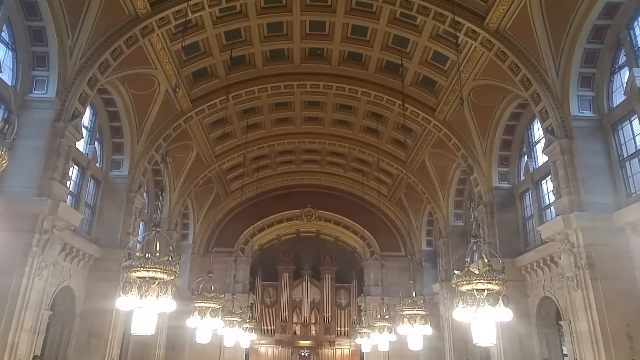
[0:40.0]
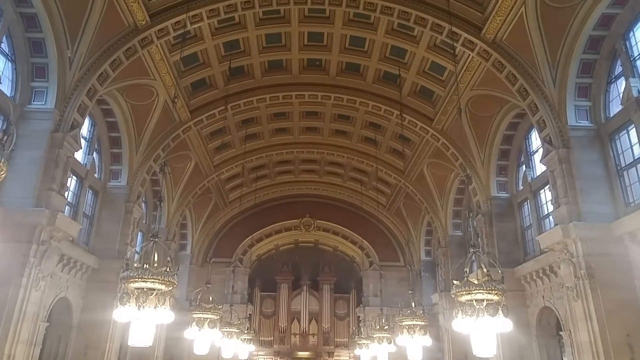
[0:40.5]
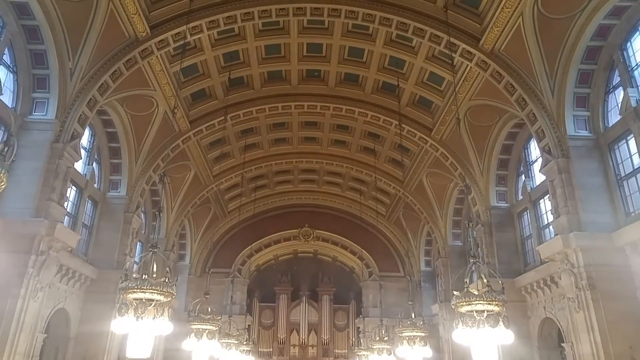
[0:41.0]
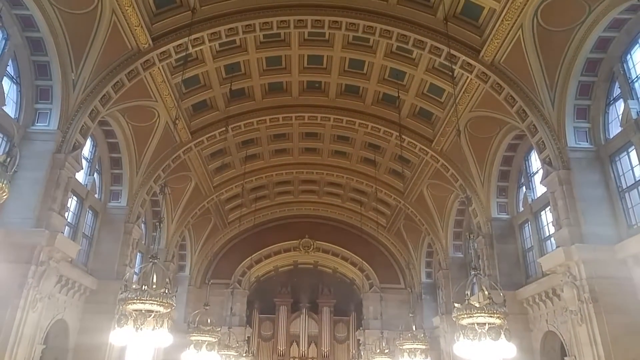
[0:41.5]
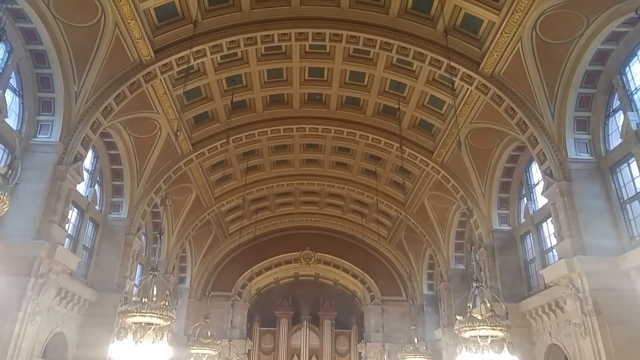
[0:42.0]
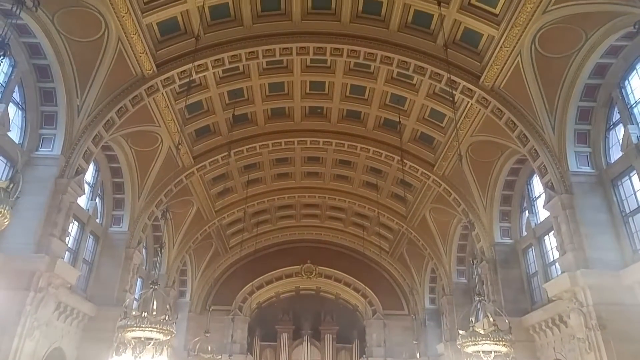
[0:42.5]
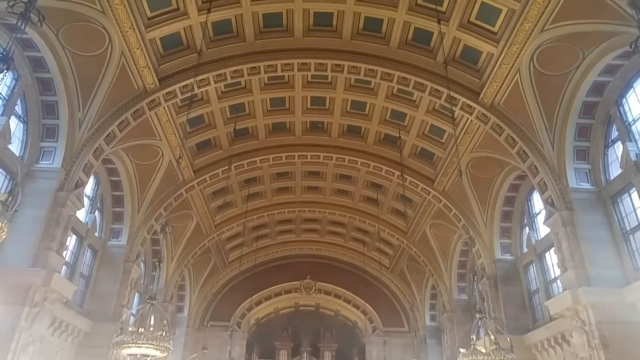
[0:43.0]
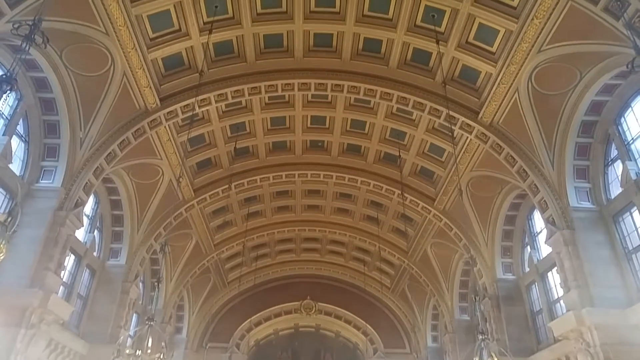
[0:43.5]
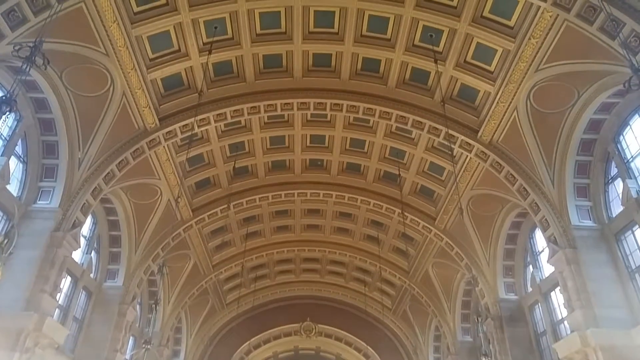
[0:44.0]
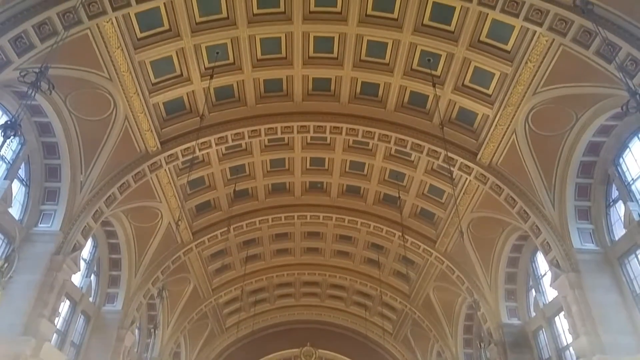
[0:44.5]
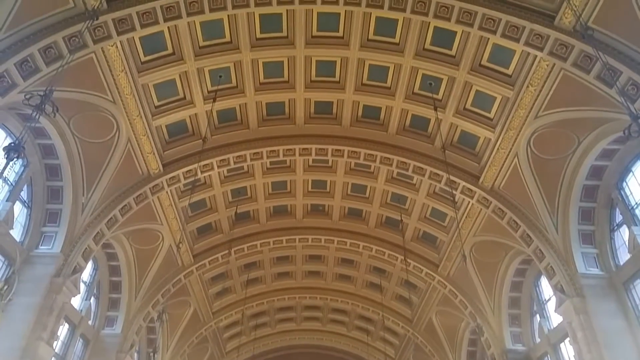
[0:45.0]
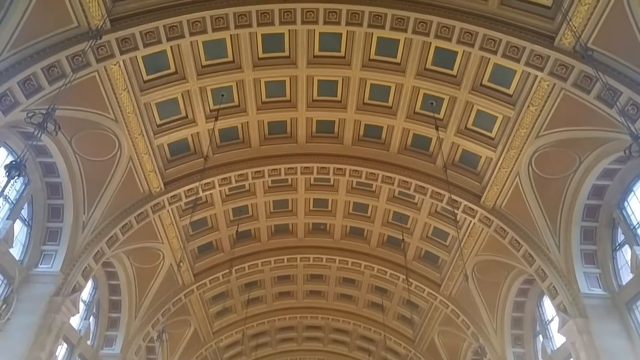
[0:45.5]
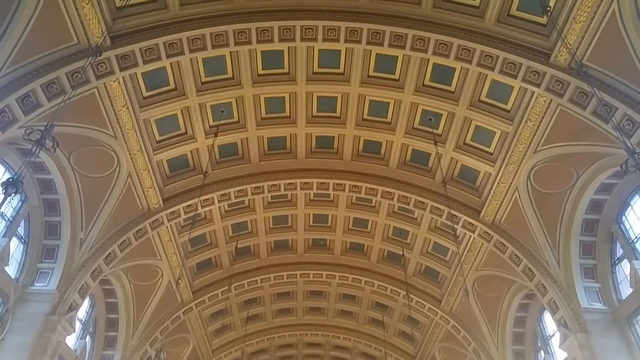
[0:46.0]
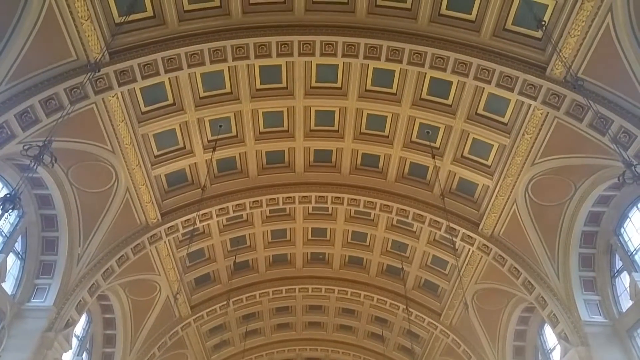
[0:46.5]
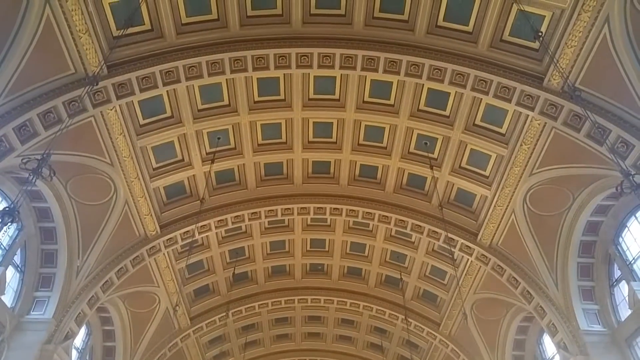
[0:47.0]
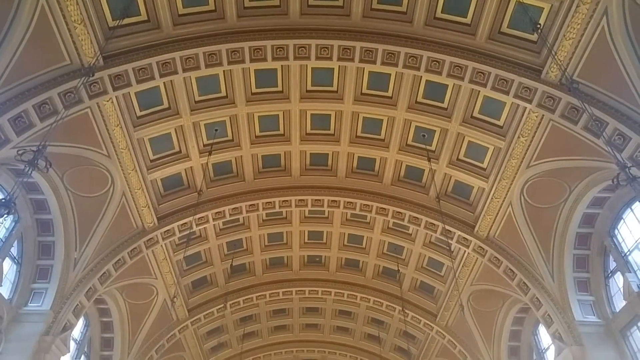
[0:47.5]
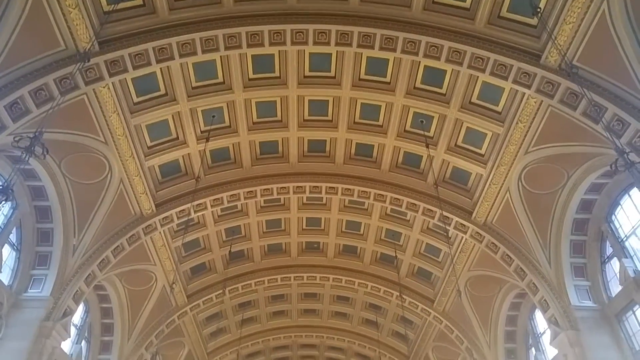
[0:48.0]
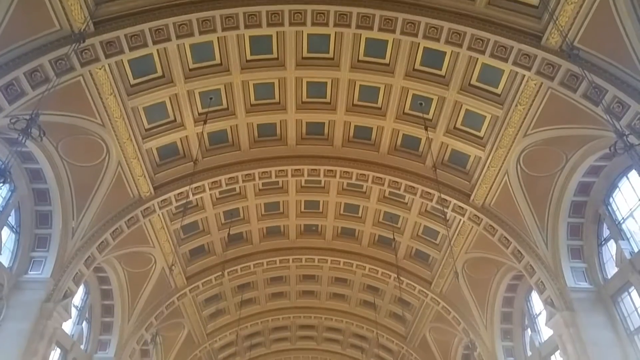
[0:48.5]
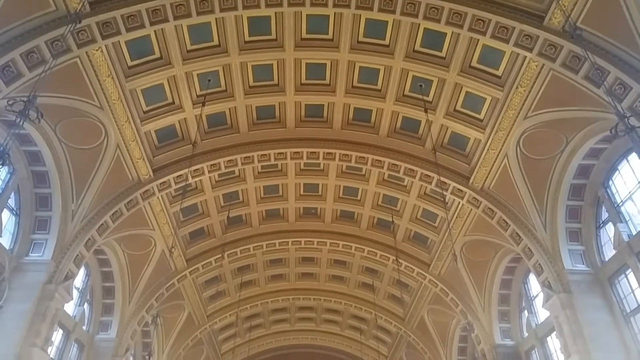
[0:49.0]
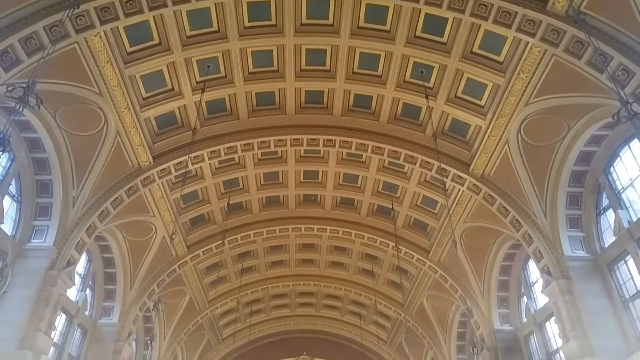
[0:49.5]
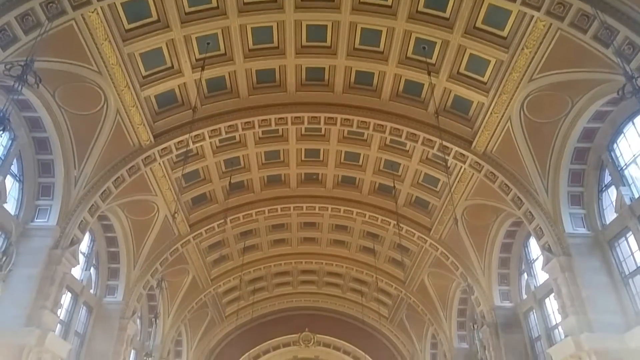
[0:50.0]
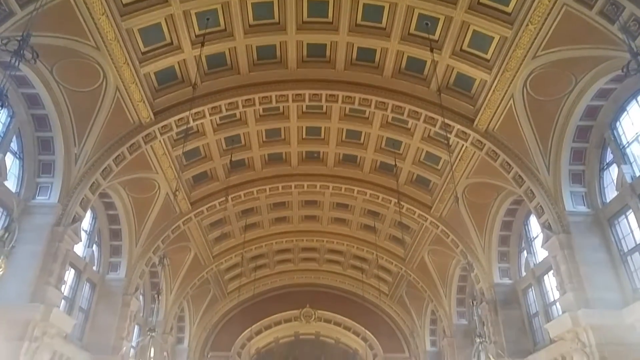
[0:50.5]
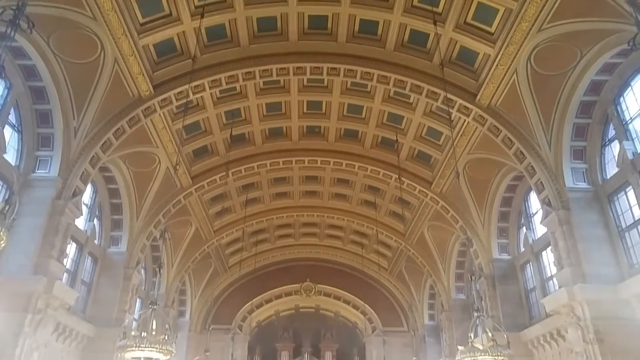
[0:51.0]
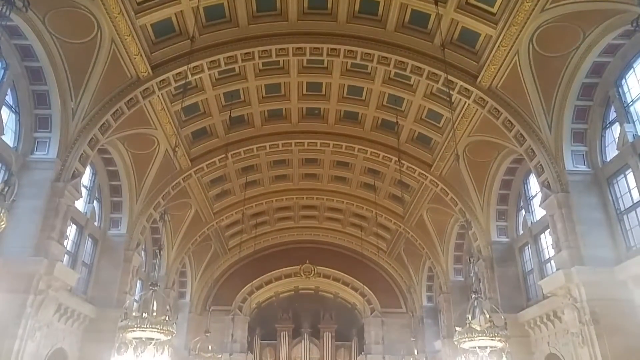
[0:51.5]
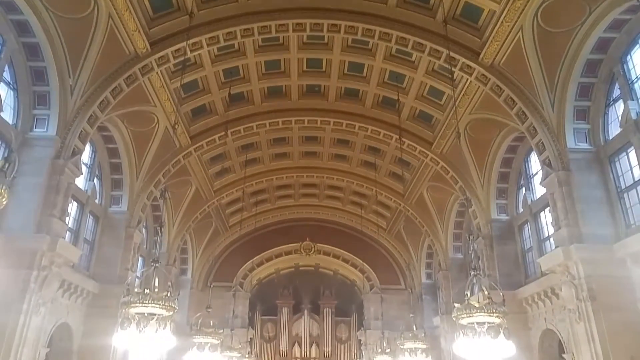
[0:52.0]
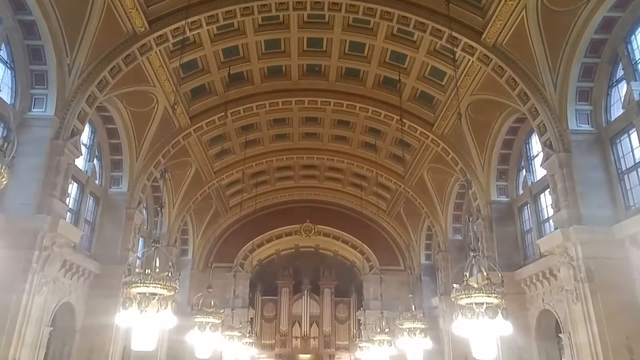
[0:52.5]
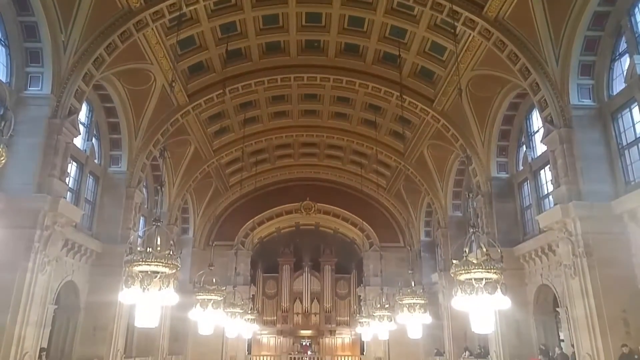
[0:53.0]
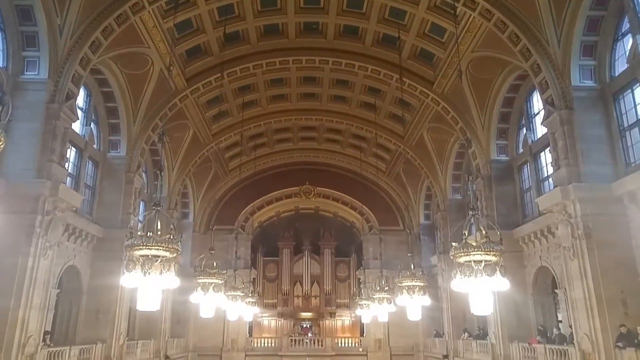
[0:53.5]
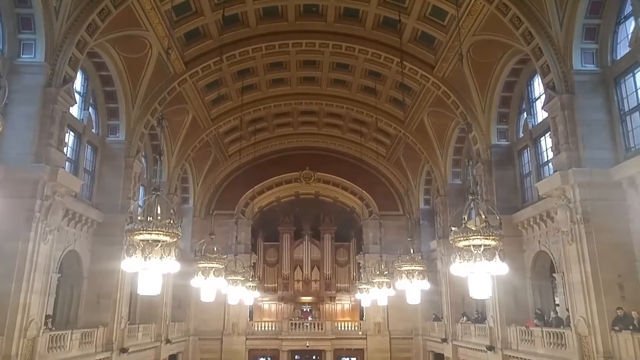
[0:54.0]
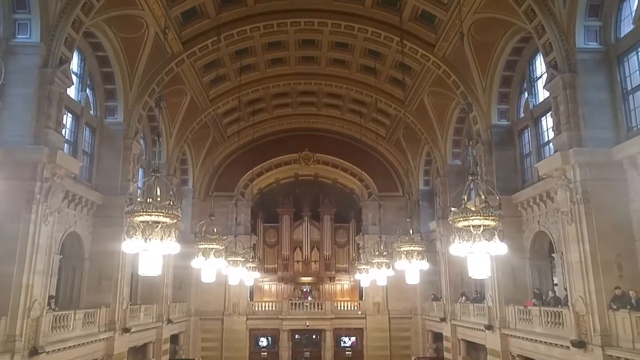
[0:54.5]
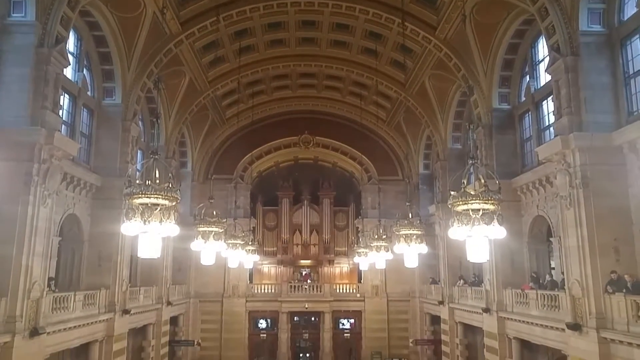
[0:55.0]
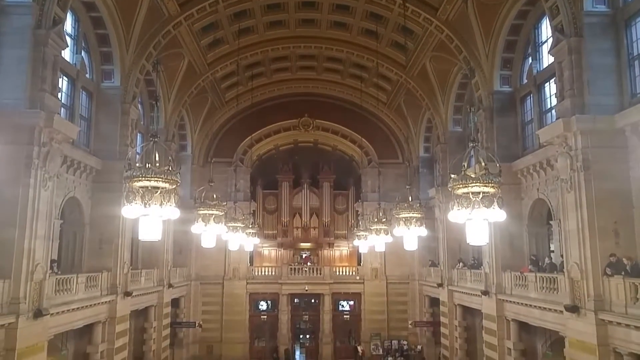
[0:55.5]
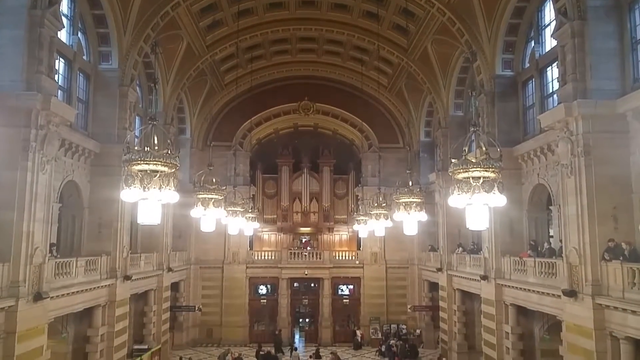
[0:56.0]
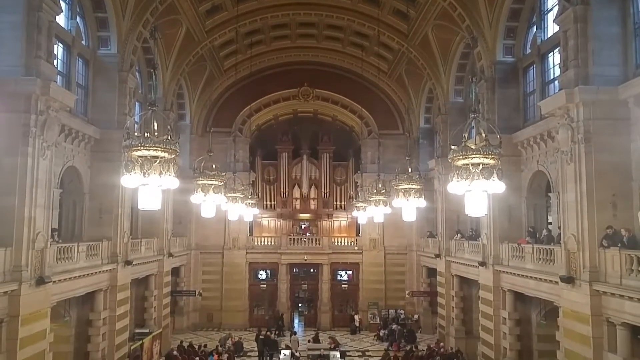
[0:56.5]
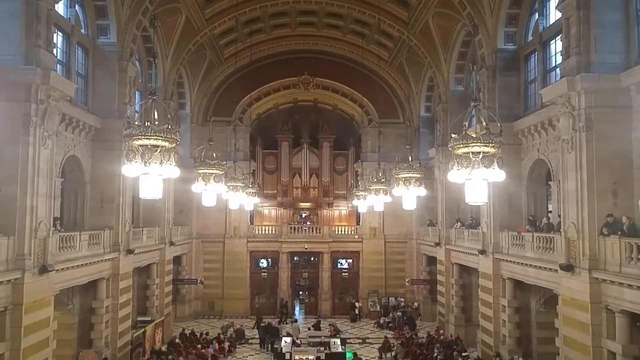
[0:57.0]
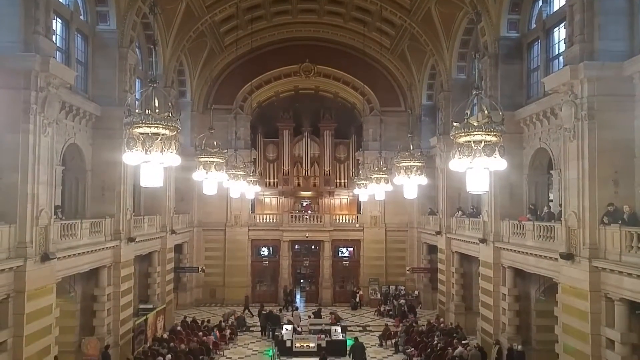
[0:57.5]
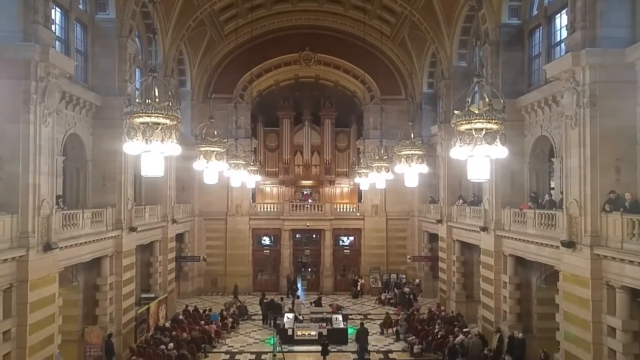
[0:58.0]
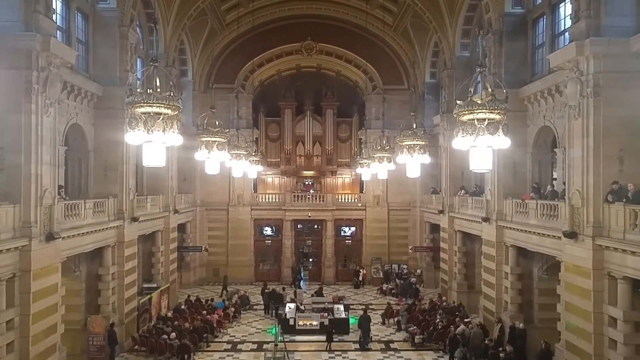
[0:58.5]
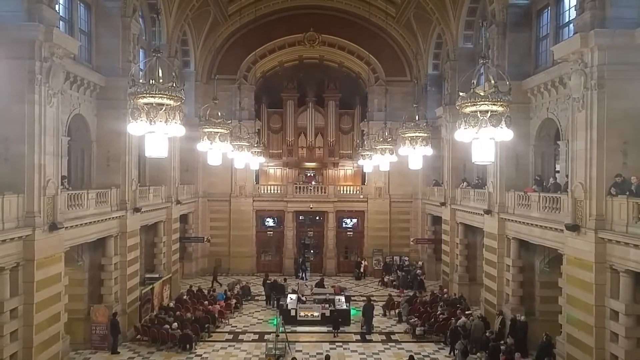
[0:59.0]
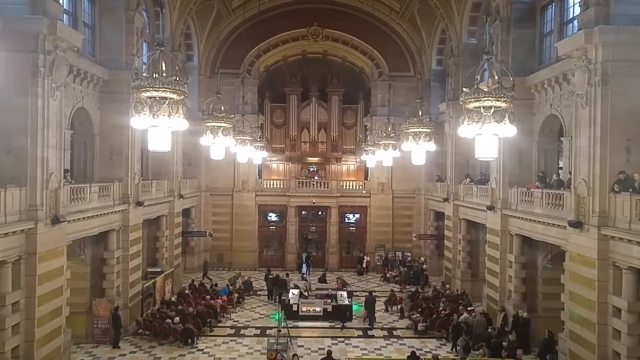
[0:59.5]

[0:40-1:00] A very large church ceiling is shown. The ceilings are shaped in an arc and have various dark green square-shaped accents. On the sides of the ceilings, large arc-shaped windows let in sunlight to light the room, and there are circular designs above the windows. All of the walls and ceilings are a brownish-tan. The camera pans down to eight large light fixtures hanging down from the ceiling. In the background of the light fixtures is the entrance of the church, with three dark brown wooden doors at the center. People are walking around the floors and are gathered on either side of the church in seating arrangements. Multiple stone columns stand between the windows on the second floor of the church.